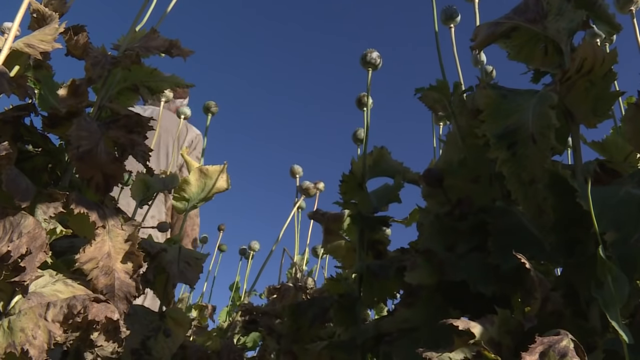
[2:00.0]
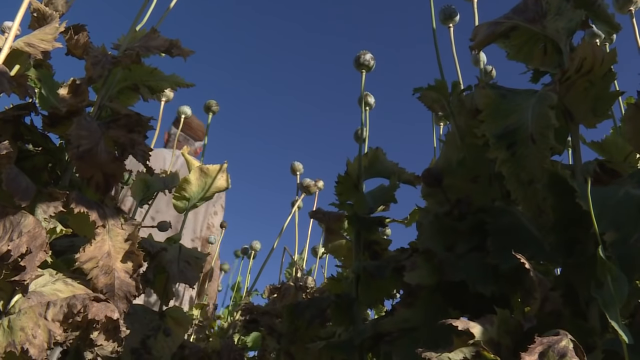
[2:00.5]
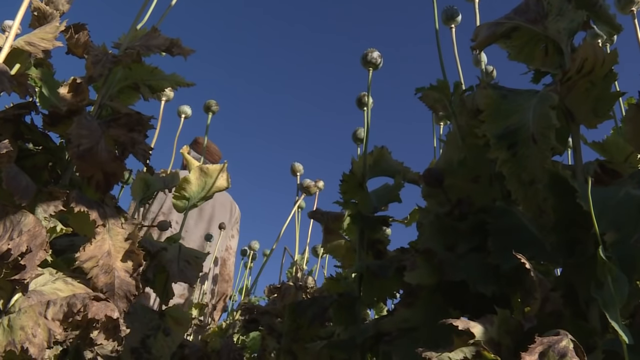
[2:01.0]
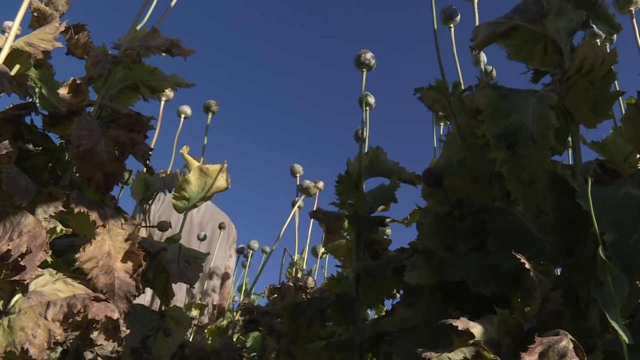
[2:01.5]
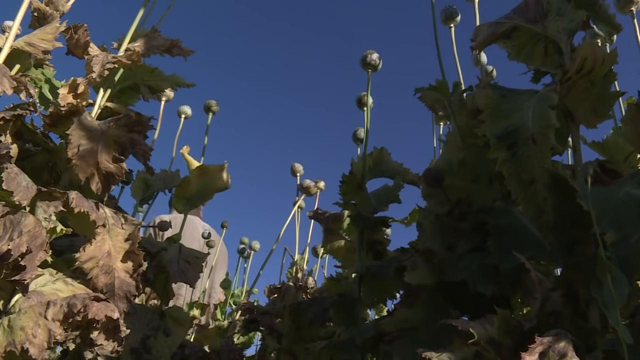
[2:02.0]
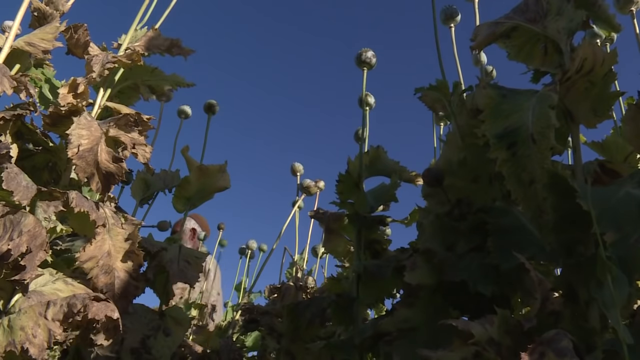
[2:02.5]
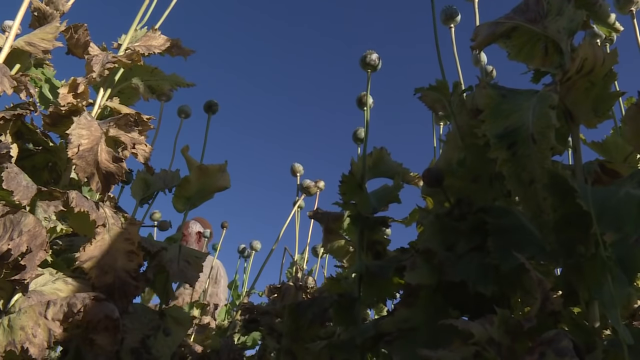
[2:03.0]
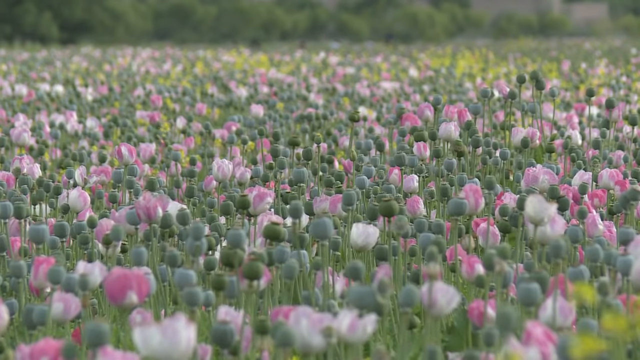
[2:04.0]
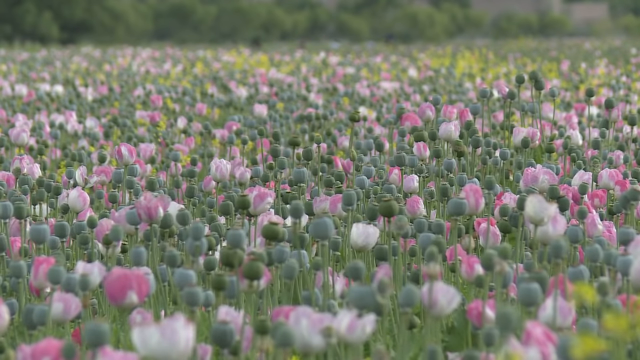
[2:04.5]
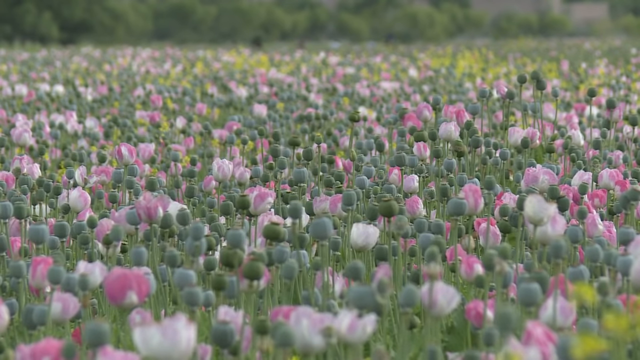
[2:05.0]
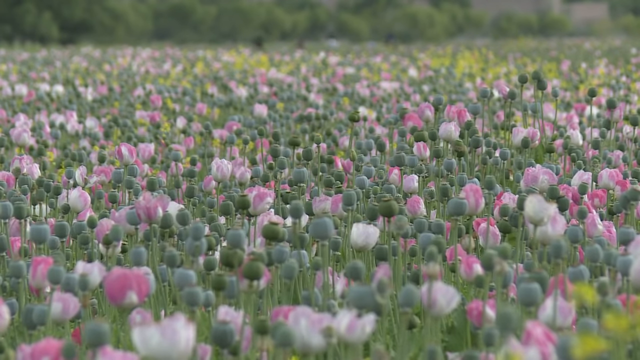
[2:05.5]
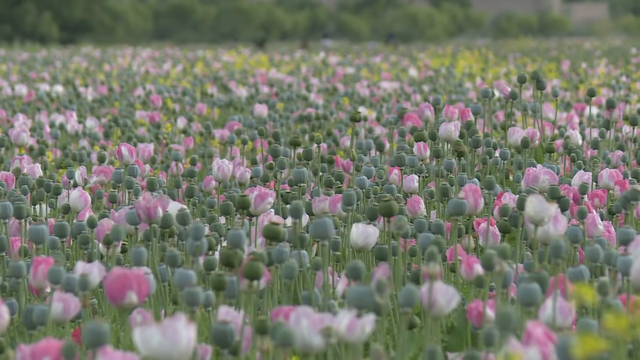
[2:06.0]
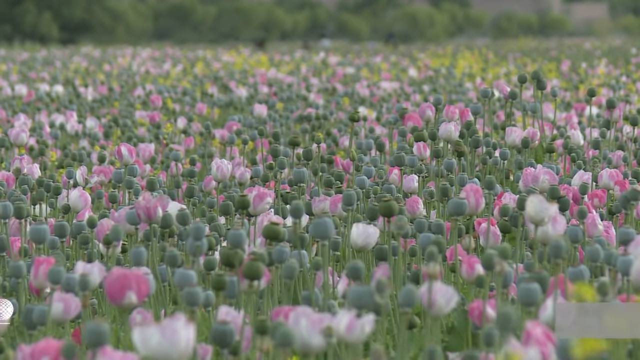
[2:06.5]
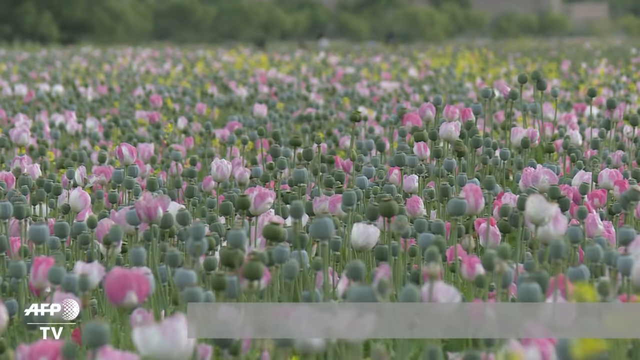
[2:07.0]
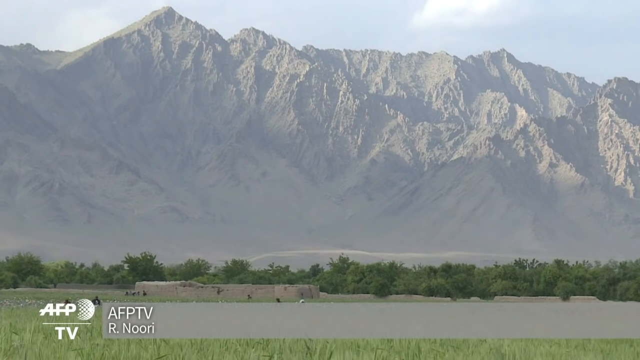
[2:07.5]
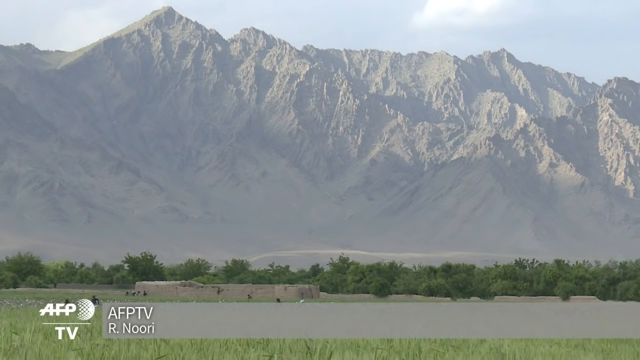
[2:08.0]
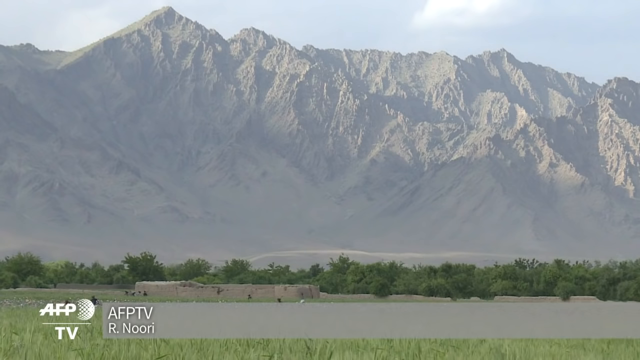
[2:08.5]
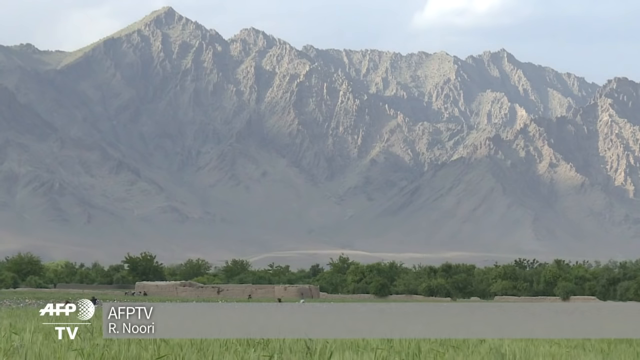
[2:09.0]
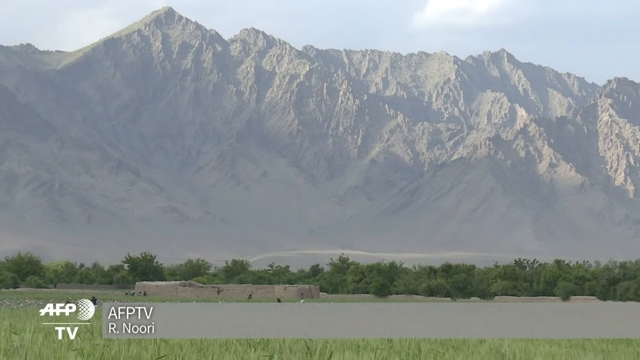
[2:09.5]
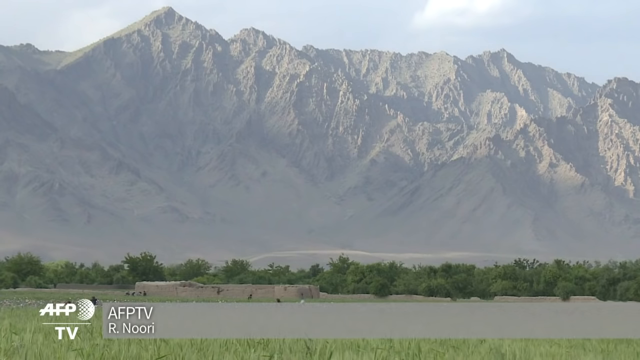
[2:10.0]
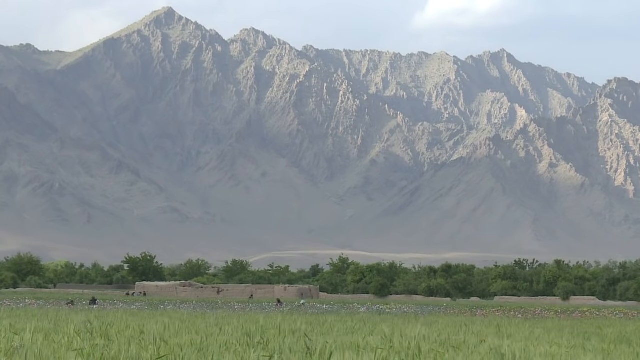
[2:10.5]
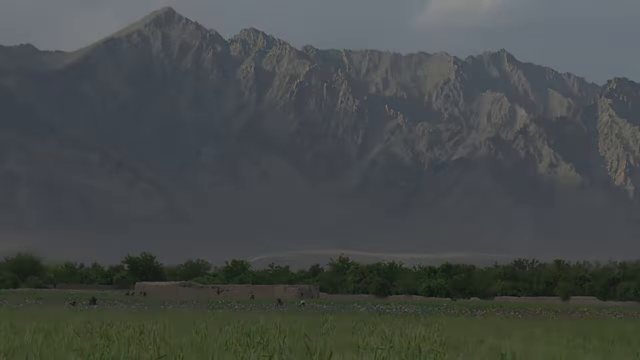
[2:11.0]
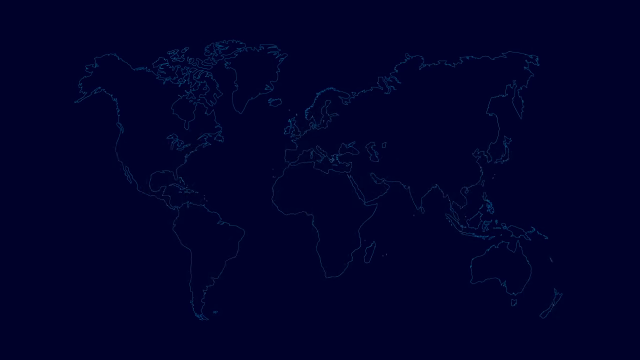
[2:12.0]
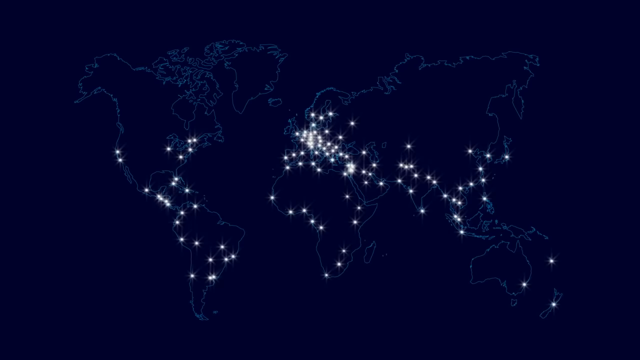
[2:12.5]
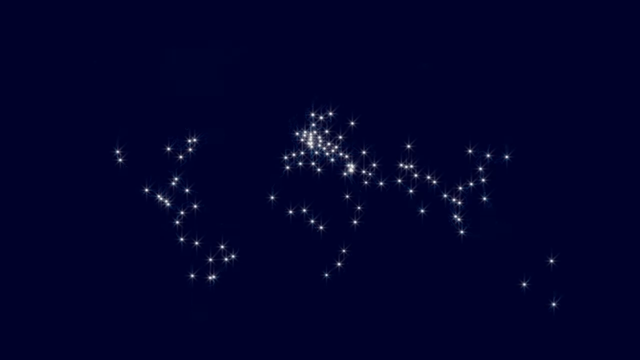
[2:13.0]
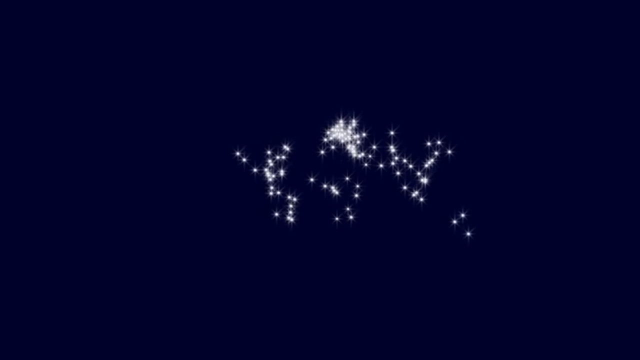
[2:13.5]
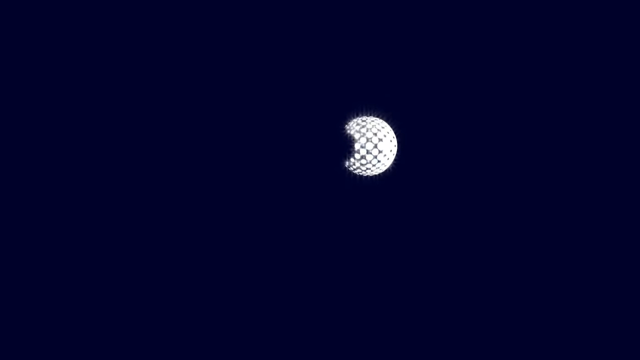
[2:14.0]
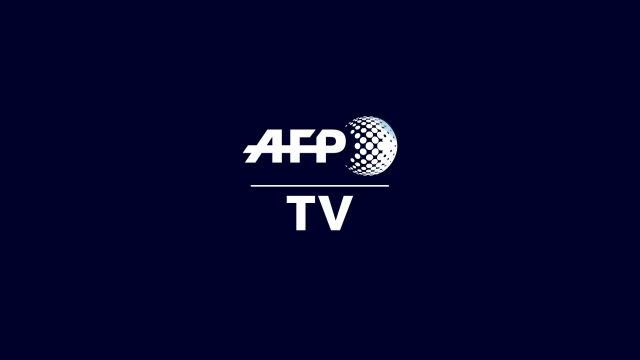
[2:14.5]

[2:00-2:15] The man takes about two or three steps away from the camera, turns to the left so only a little of his side shows through the poppies, and starts picking the poppy. A wider shot of the poppy field with no one in it follows; the poppies reach probably four-fifths of the way up the screen, in light pink, darker purple, some white and green, with green trees across the far distance. Then a huge grayish mountain is shown, coming in from the left, arching up about a third of the way across and coming down to the right off the side, covering most of the image. It is very peaked and pointy at the top, with blue sky behind it. At its base are a little stone building with a bit of dirt area in front of it and trees lined up all the way across, and there looks to be a little smog in front of the mountain. Finally, a blue outline of the area appears, little dots pop up, and the name of the news station is shown.